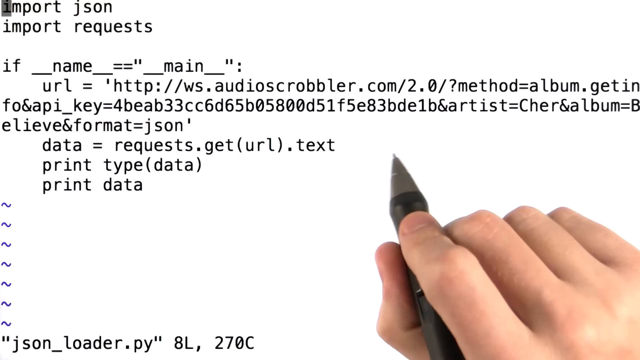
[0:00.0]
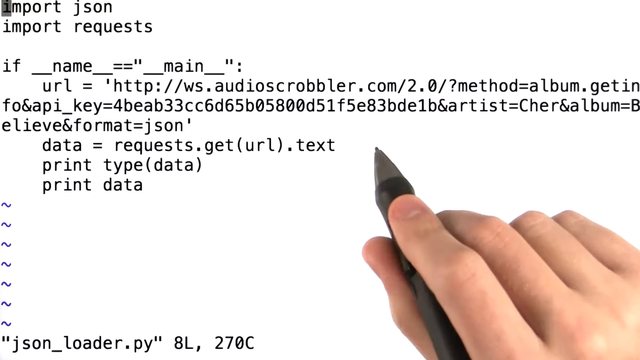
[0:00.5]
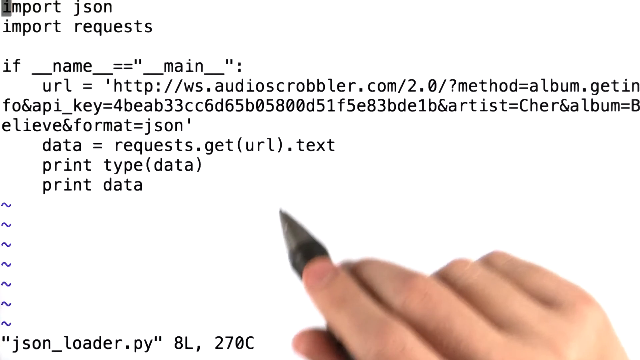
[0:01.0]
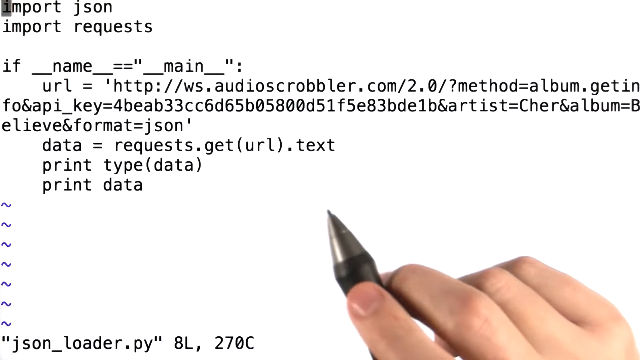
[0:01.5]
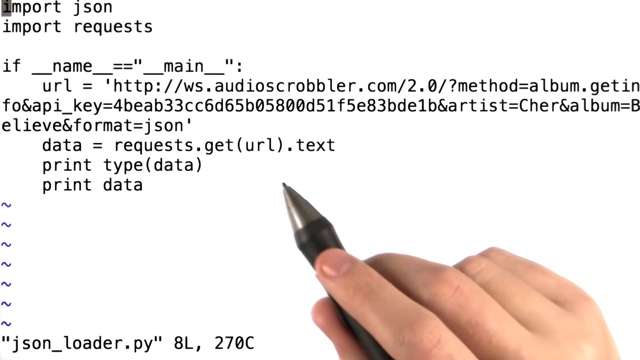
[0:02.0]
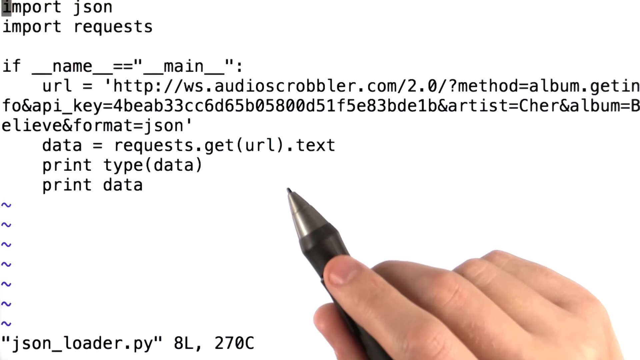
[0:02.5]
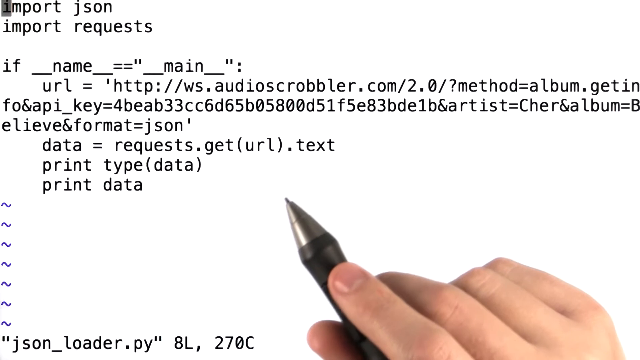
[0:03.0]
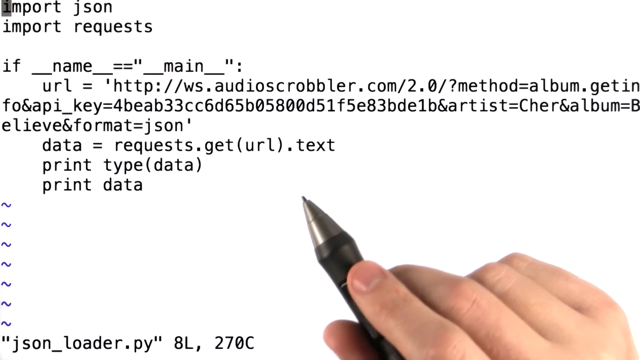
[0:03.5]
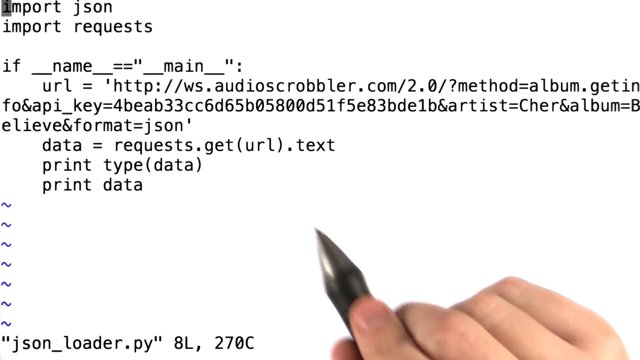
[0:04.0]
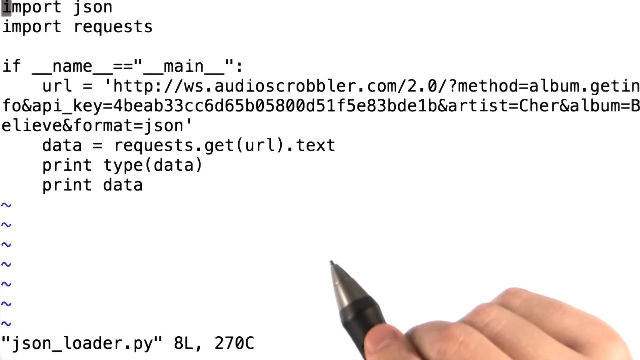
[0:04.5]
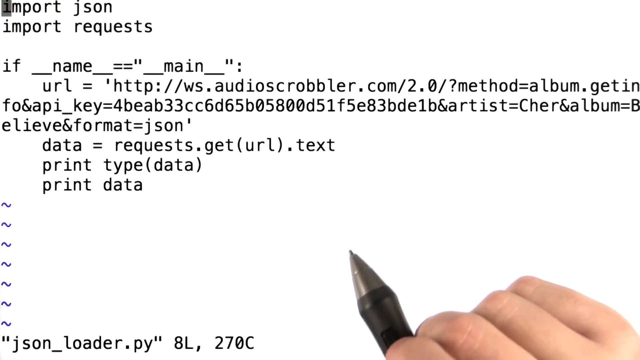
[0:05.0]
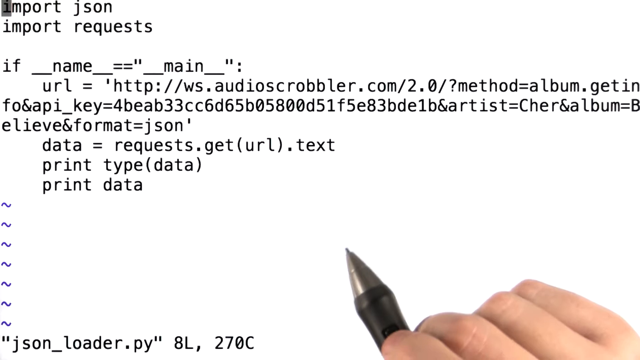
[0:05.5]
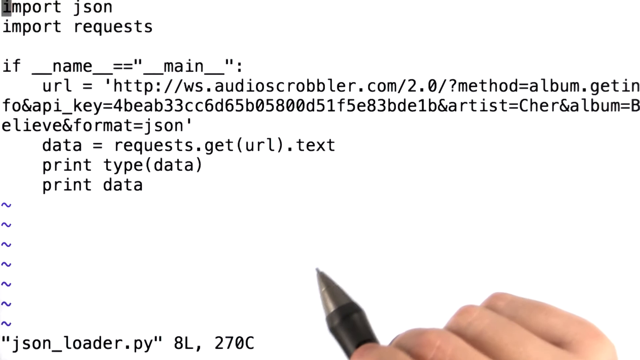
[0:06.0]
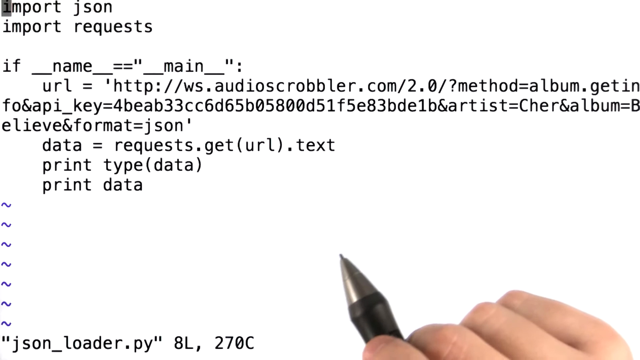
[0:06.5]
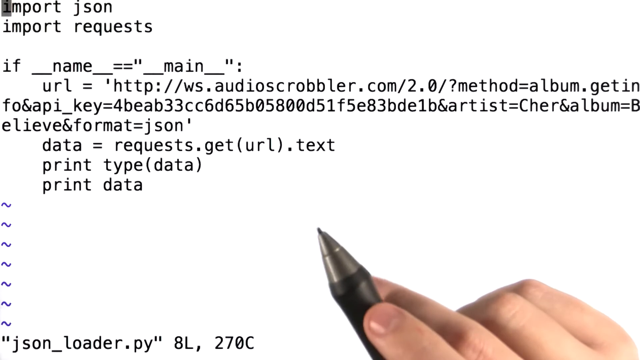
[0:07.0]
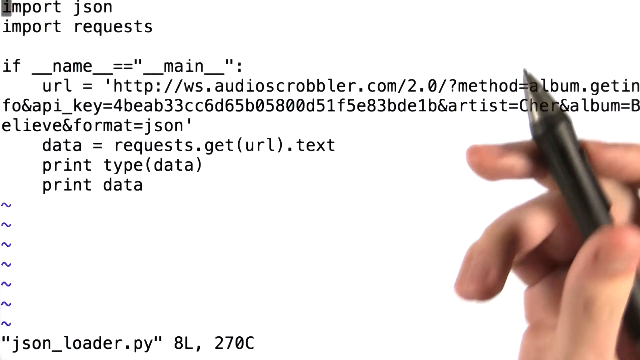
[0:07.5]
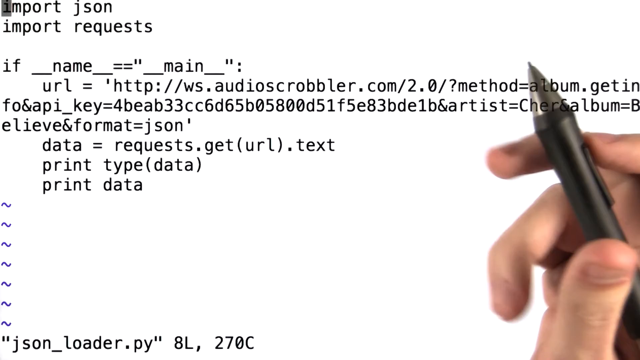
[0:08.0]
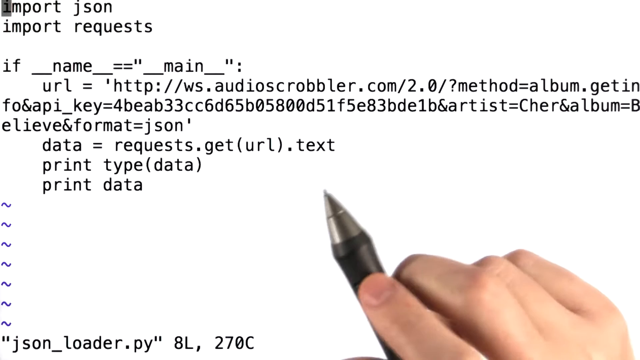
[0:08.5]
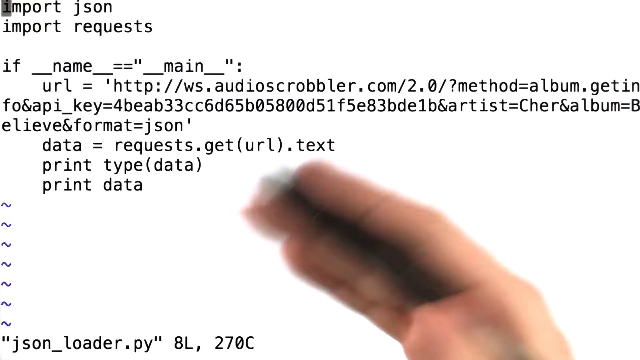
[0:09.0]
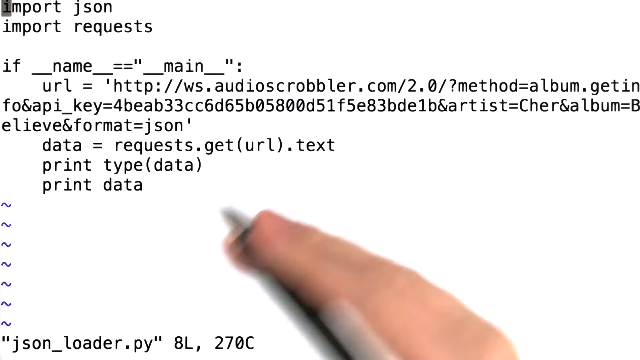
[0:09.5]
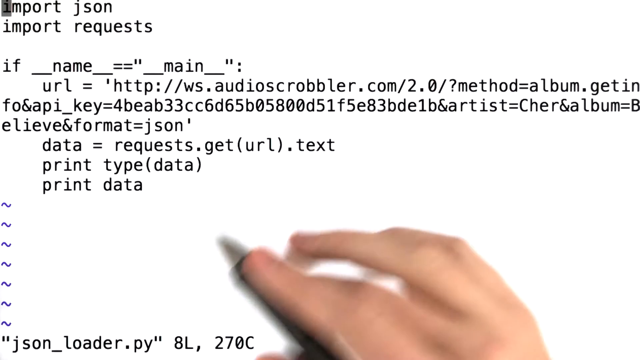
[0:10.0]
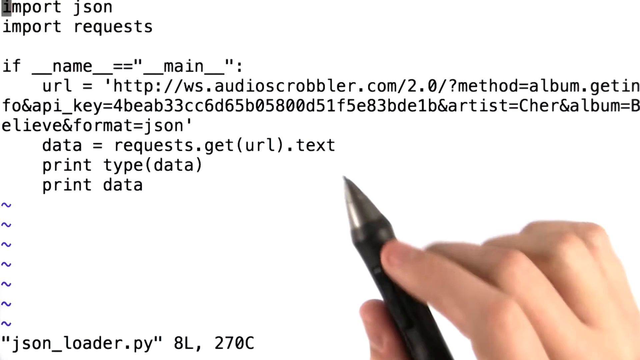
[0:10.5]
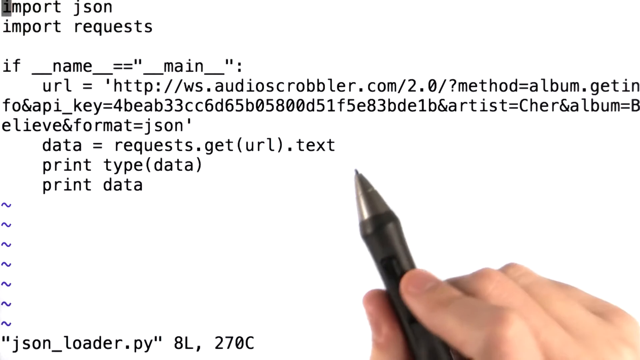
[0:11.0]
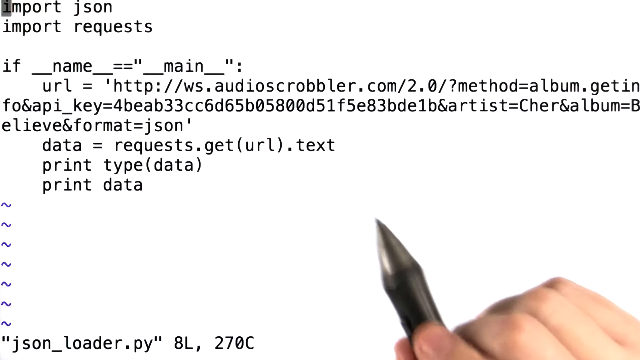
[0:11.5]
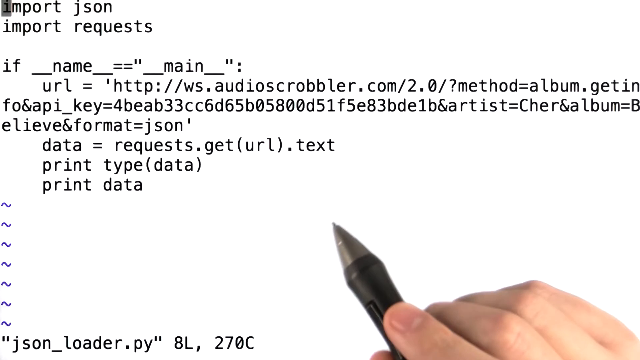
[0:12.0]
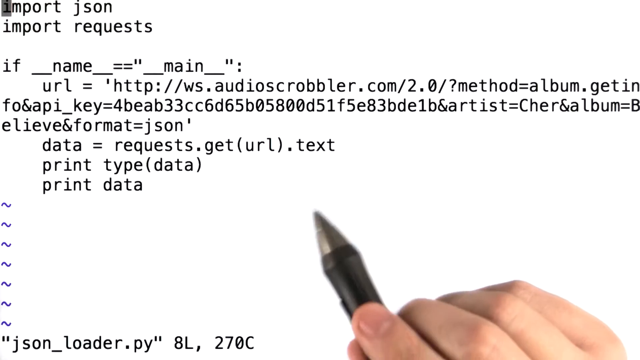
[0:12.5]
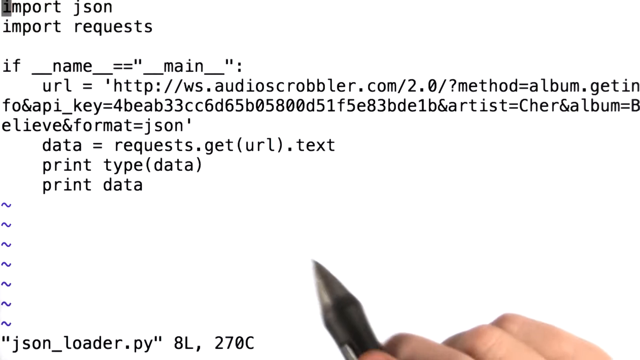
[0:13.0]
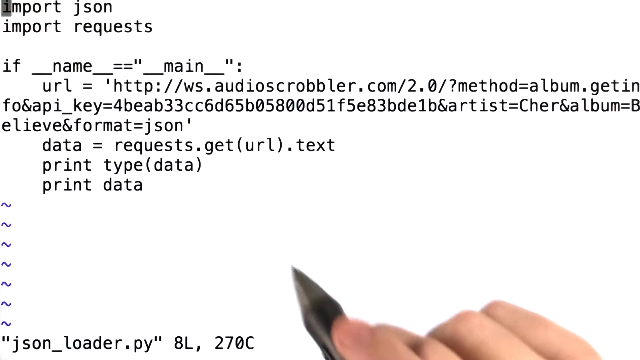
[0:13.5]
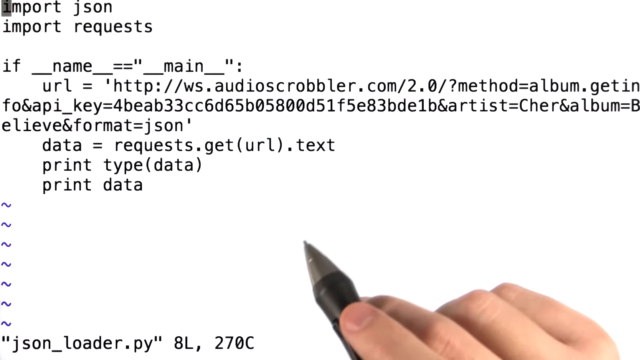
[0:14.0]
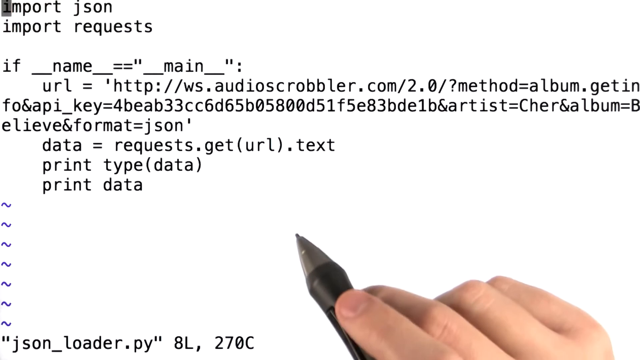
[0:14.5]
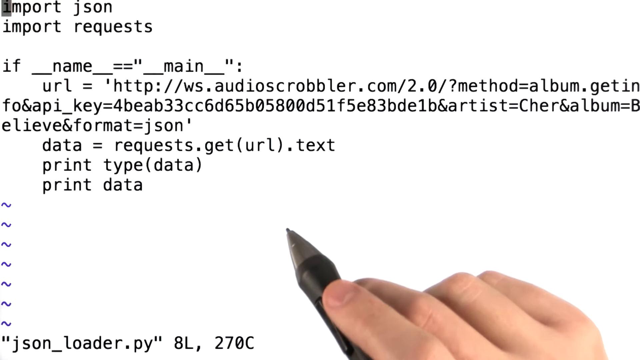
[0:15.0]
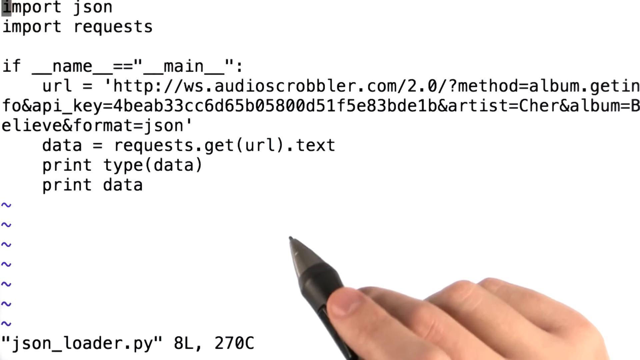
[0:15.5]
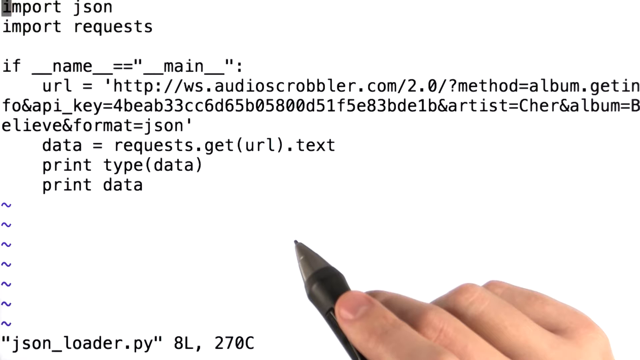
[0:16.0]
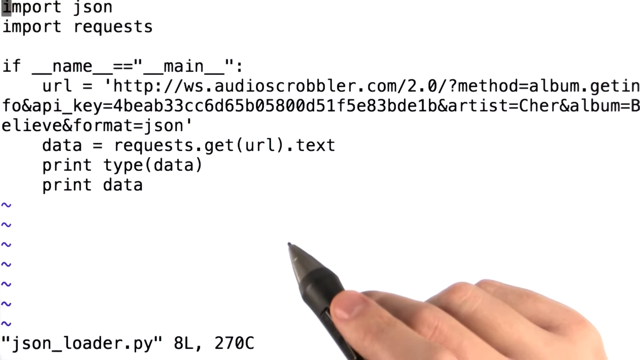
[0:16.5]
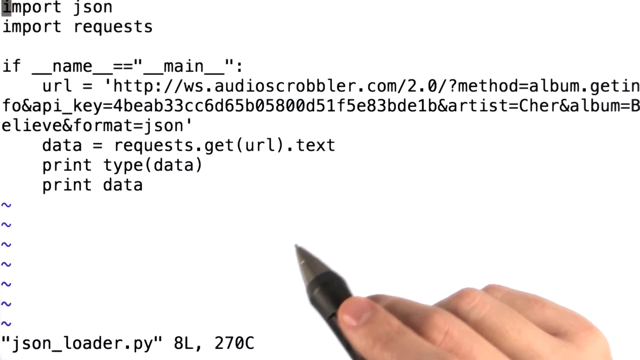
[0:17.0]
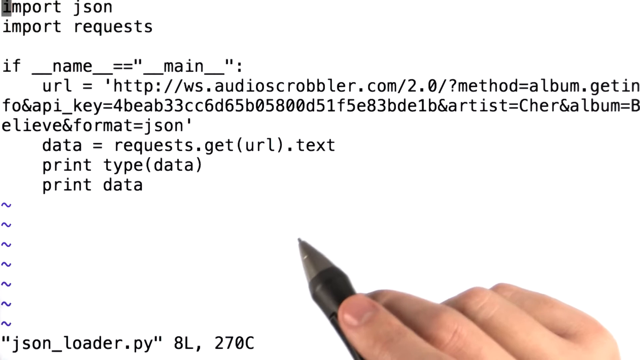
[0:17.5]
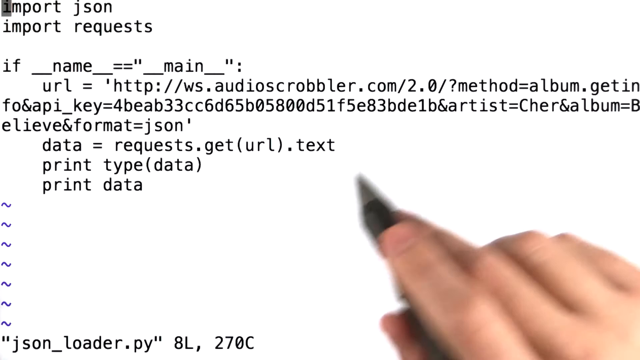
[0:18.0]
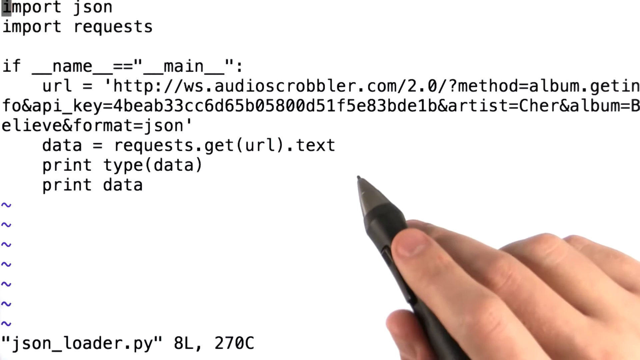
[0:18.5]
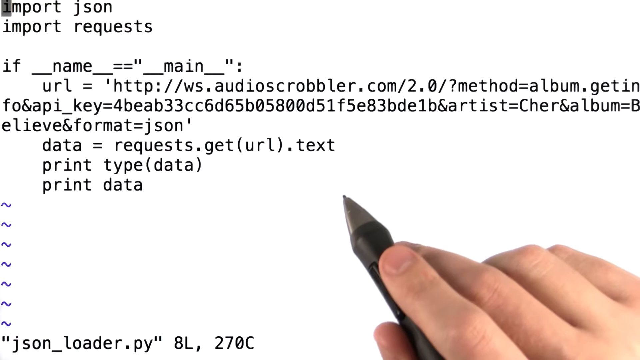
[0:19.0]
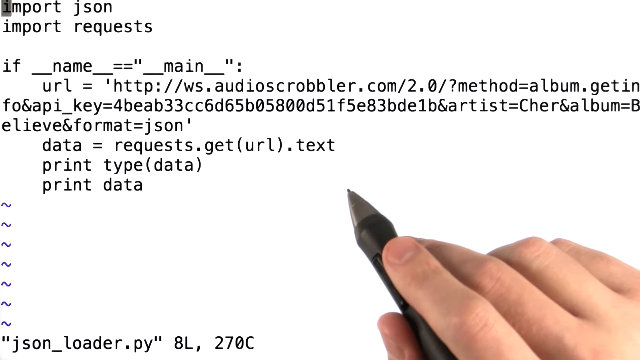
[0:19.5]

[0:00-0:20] Code is shown on a page, reading "import json" and "import request", followed by an "if name equals main" line, a URL line, a method line, a long key, lines mentioning artist, album and format, a line requesting the URL text, and "print the data". The code appears to be for going to a website and grabbing information from it. The author's hand is visible holding a pen, which he moves around the code. He is working with a projector, and the code can visibly be seen projected on his pen.